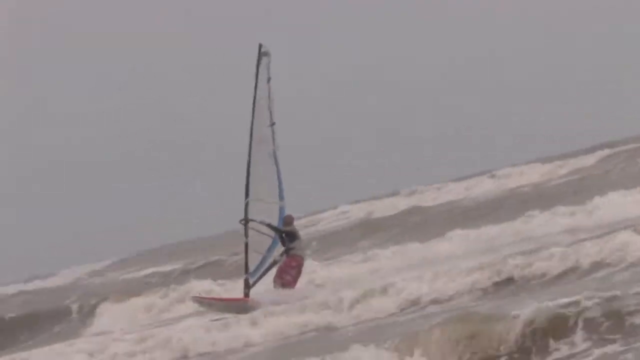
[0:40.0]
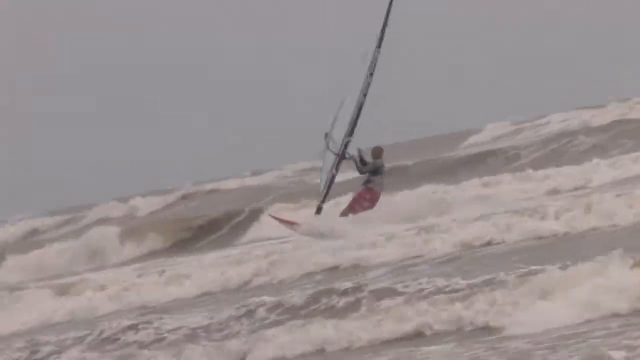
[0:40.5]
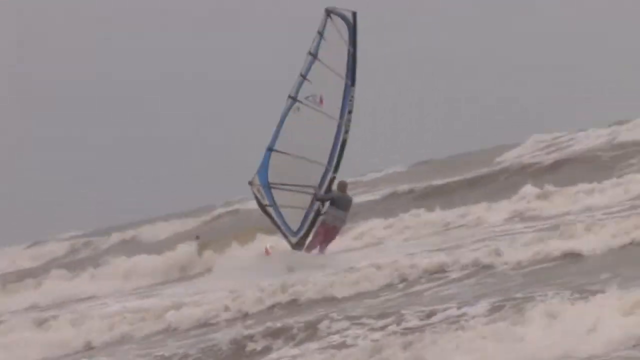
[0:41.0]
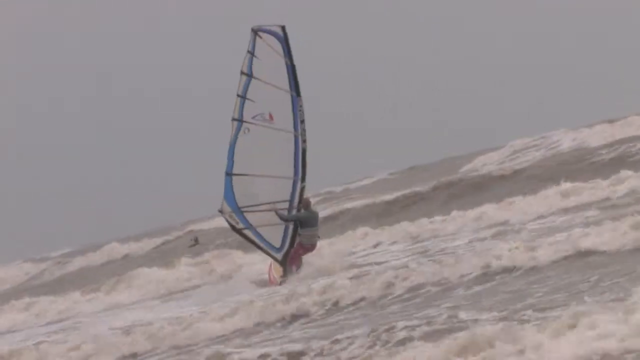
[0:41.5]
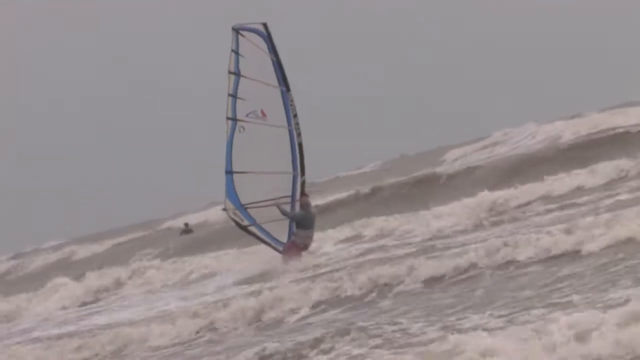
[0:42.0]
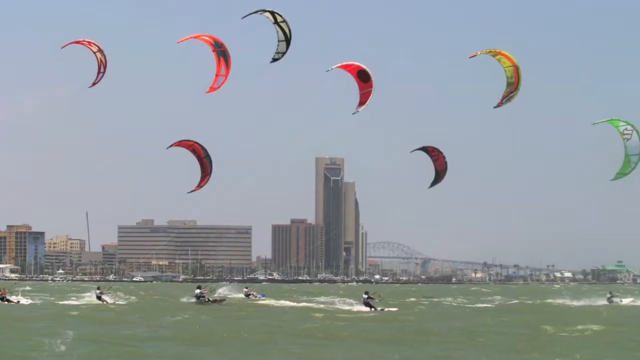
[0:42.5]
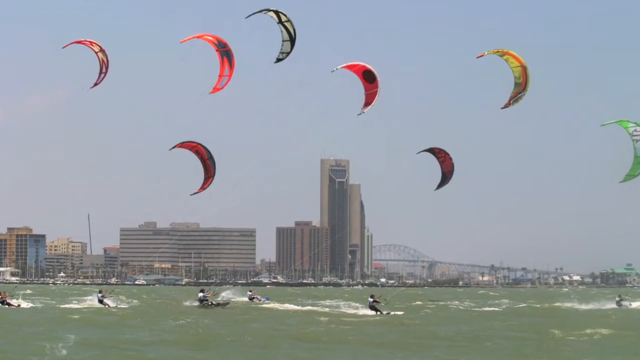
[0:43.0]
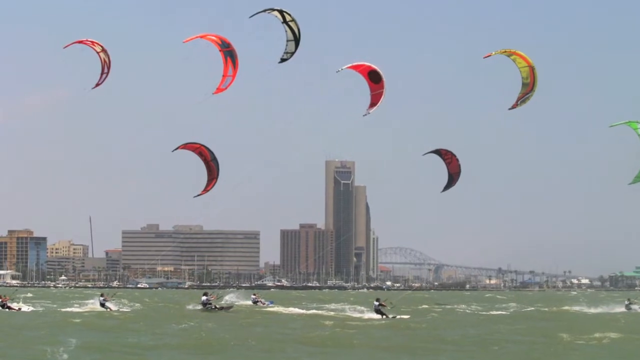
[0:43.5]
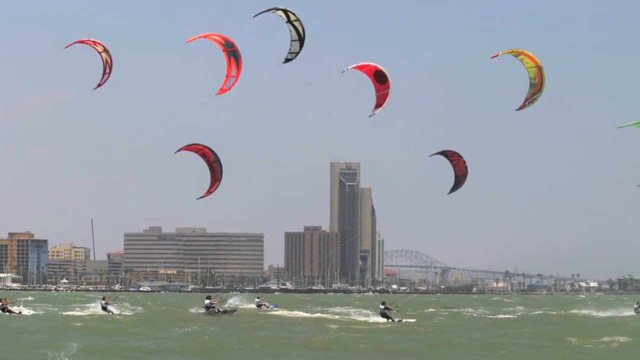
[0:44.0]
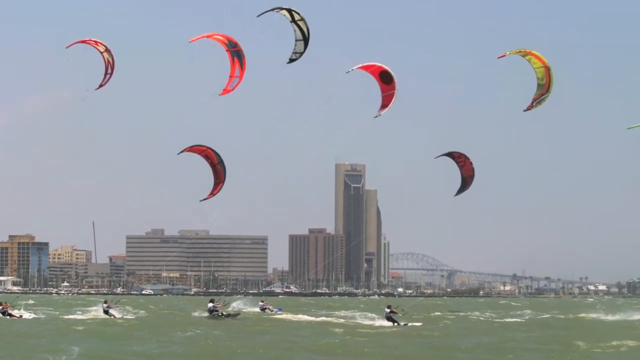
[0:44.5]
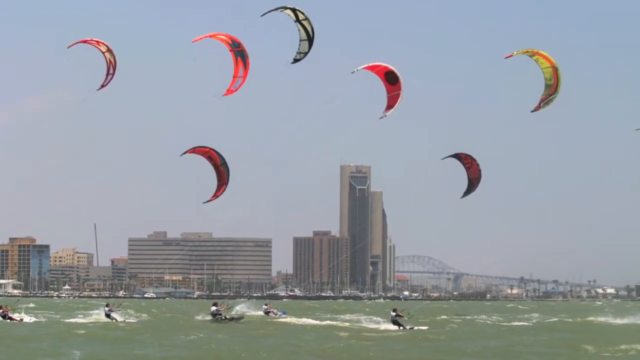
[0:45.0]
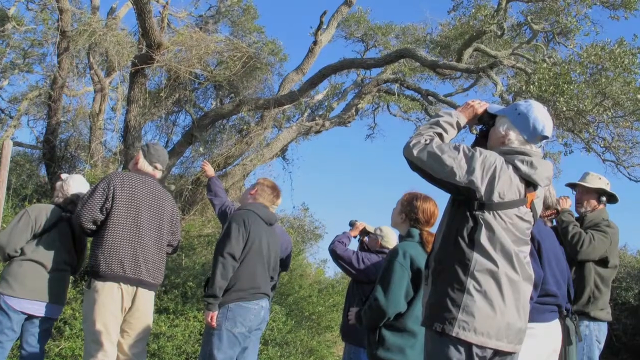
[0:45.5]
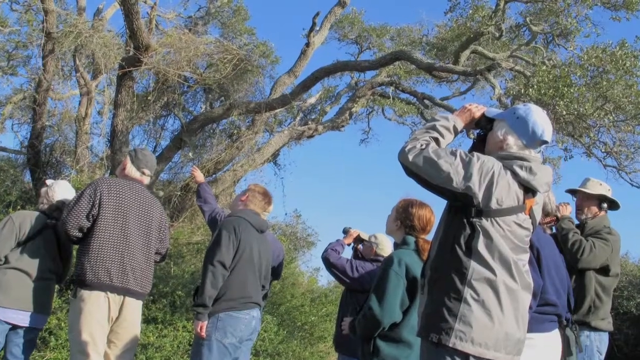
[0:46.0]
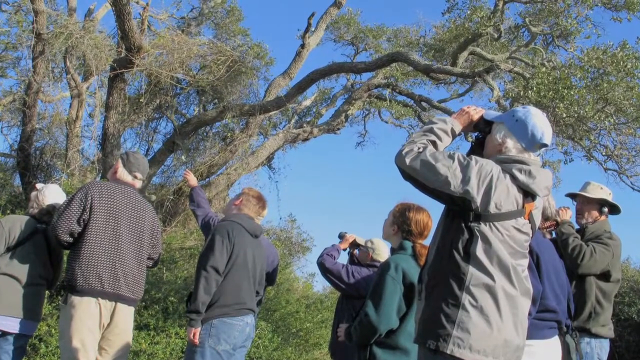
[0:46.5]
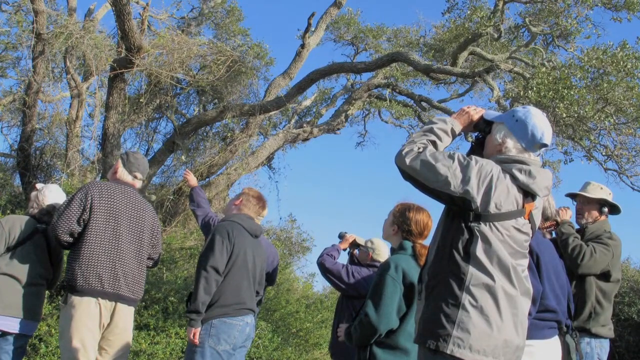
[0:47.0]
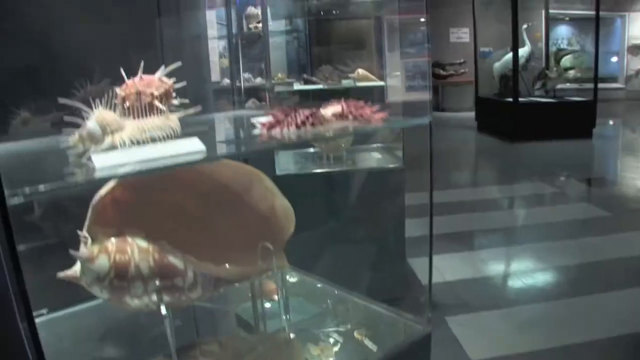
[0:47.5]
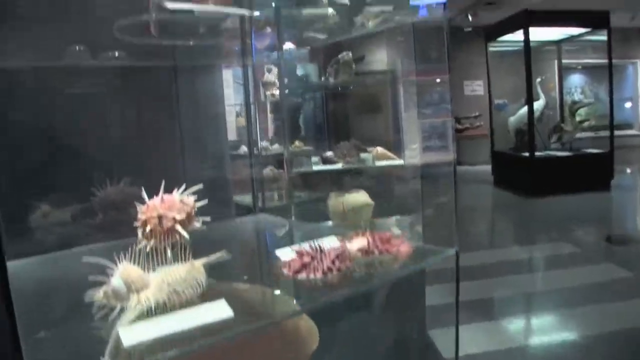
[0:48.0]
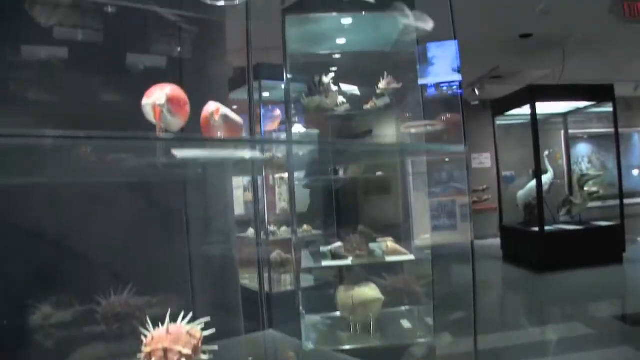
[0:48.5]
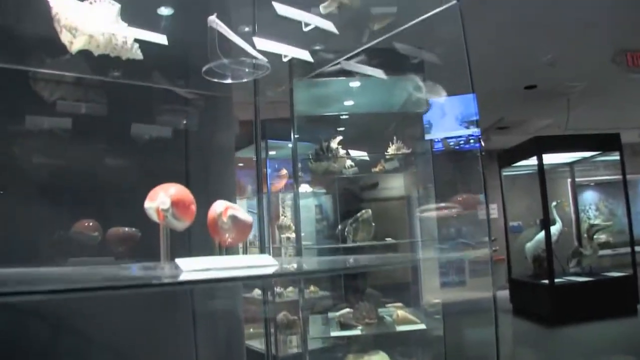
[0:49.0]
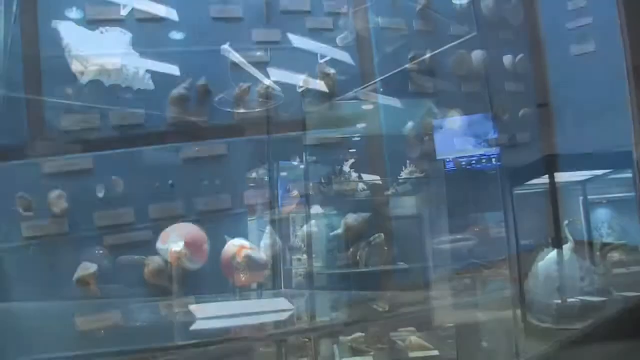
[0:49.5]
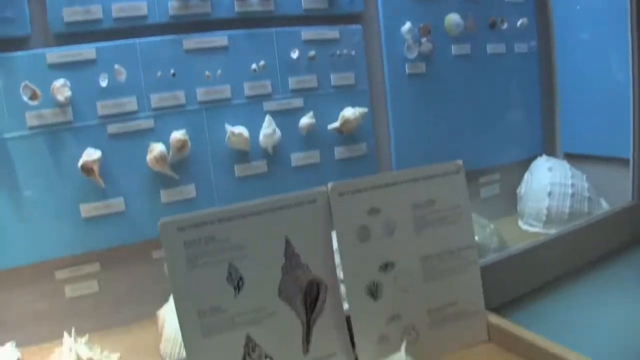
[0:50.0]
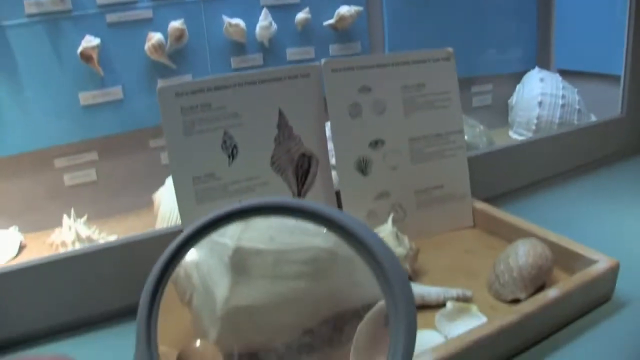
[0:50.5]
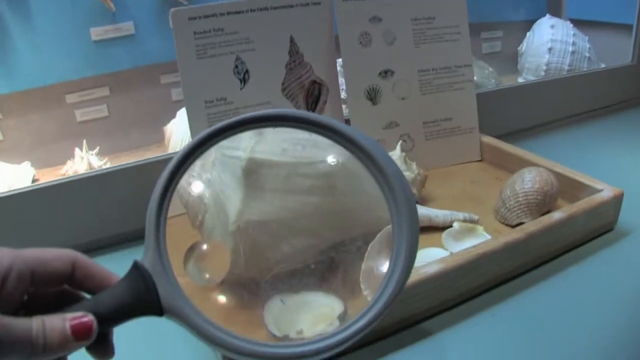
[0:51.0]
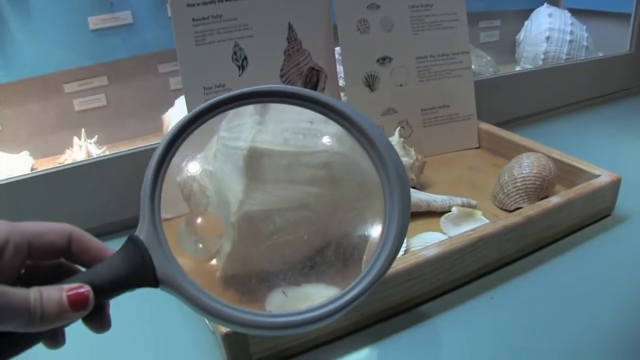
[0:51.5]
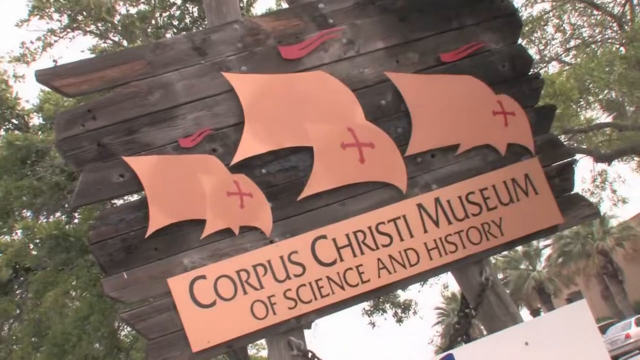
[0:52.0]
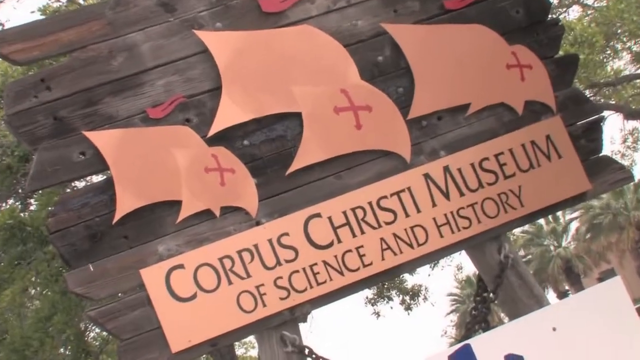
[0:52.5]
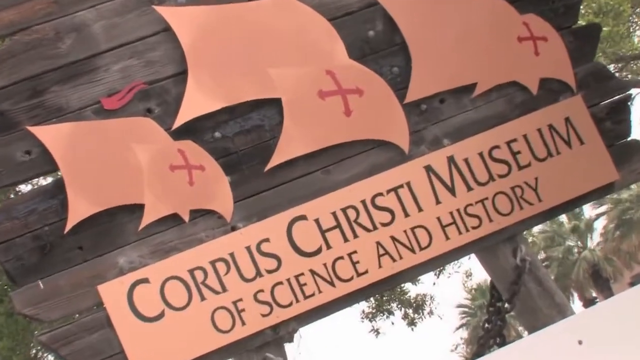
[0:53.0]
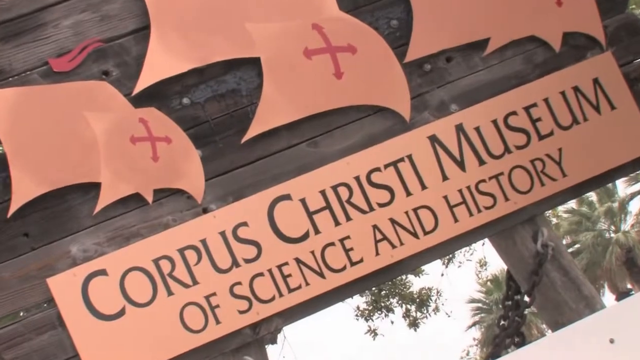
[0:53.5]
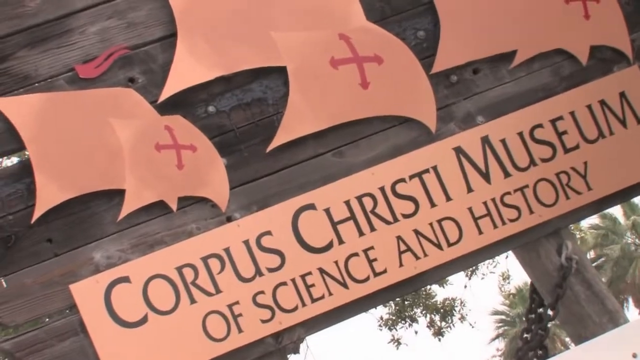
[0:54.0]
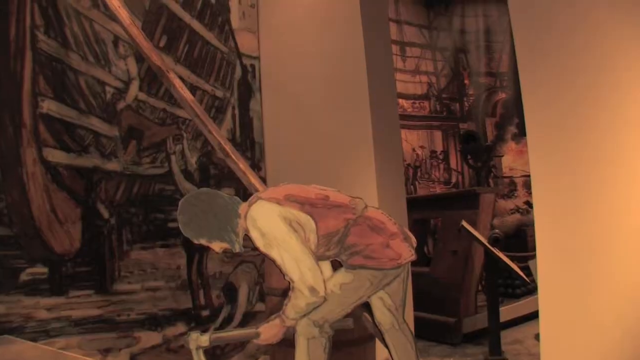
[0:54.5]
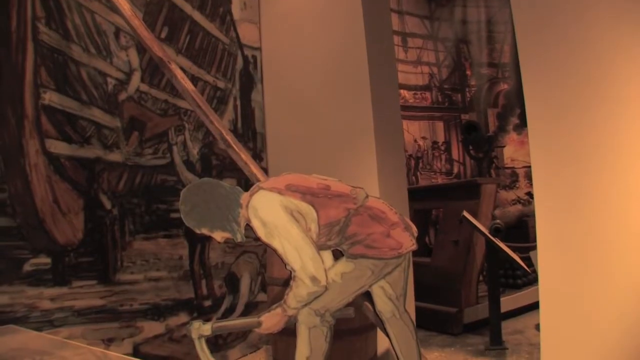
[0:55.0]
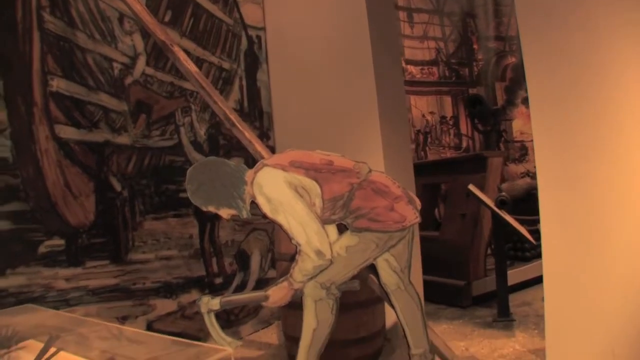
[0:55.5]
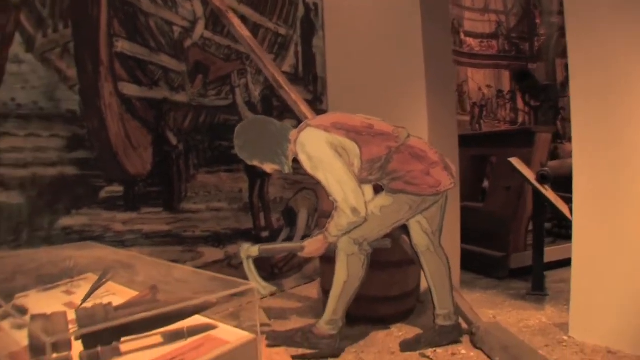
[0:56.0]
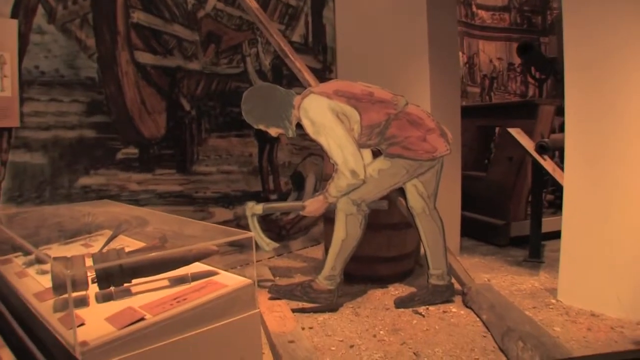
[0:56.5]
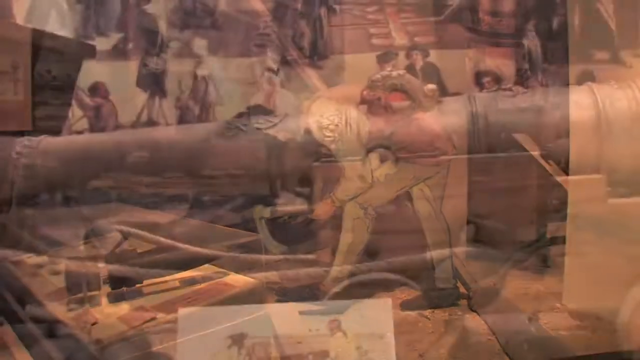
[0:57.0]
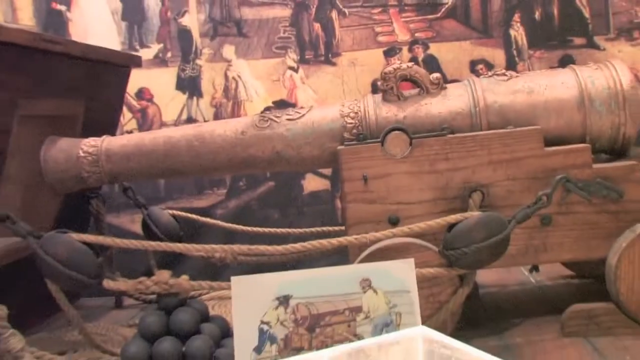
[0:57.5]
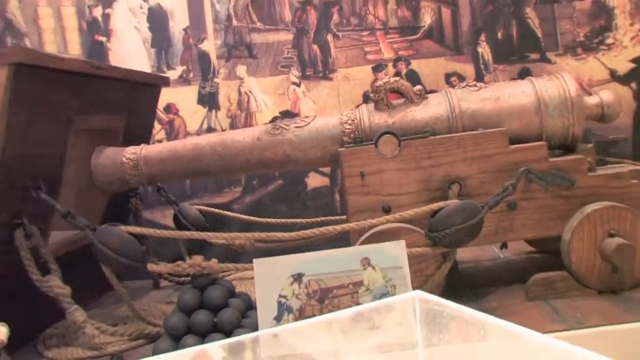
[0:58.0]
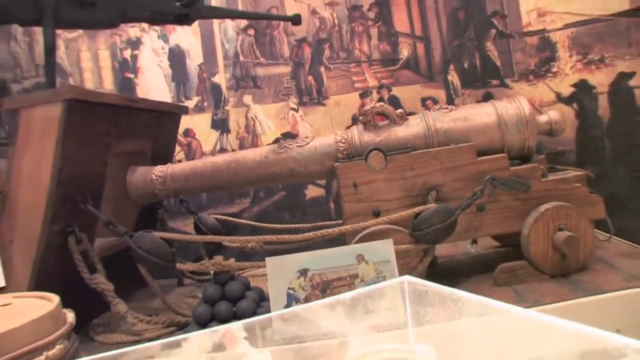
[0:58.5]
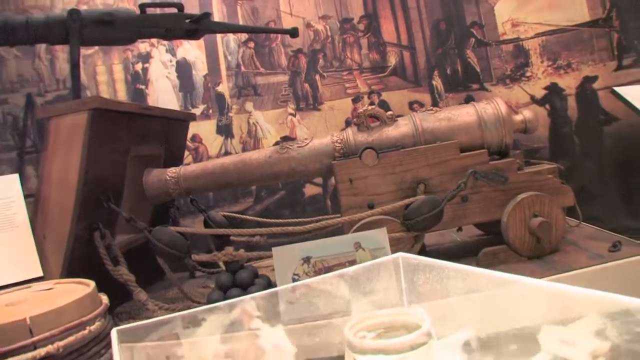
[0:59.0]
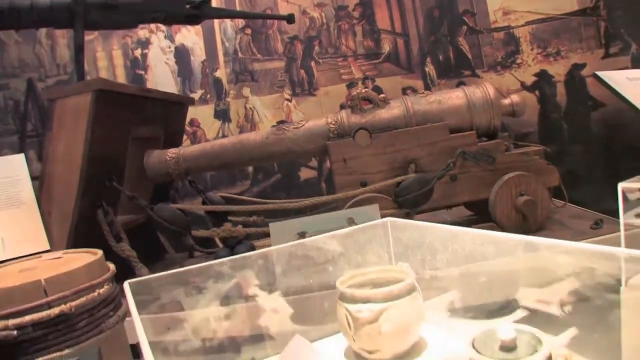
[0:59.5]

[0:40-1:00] A person on a sailboard is sailing in the ocean, facing toward the bottom left of the screen, with fairly large waves about waist height behind him. The scene switches to people on what look like surfboards connected to little parachutes that are blowing toward the right side of the screen, with a still image of a cityscape in the background. Next, people stand in front of a large tree with binoculars in their hands, looking upward; one of them holds their left hand out, pointing with the left index finger. Then the inside of a building that looks like a museum appears, with lots of seashells on display. At the bottom of the screen a person holds a magnifying glass in their left hand; only the magnifying glass and the hand are visible. Next comes an image of a painting or 3D cardboard structure, and then an old ship's cannon.